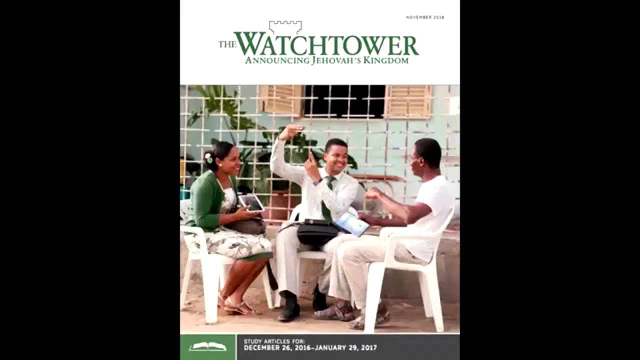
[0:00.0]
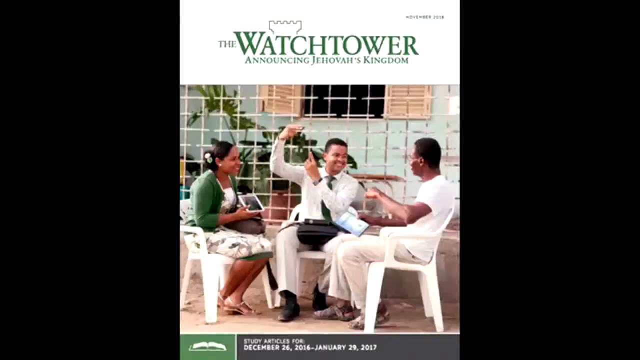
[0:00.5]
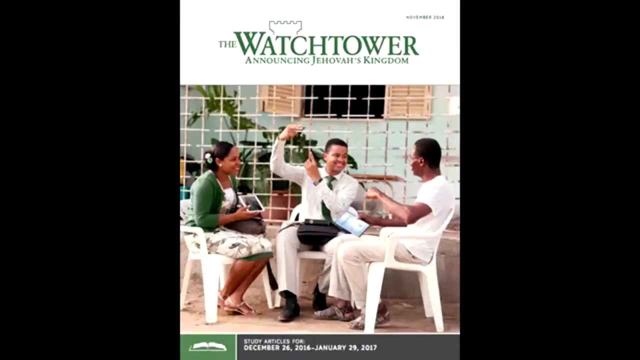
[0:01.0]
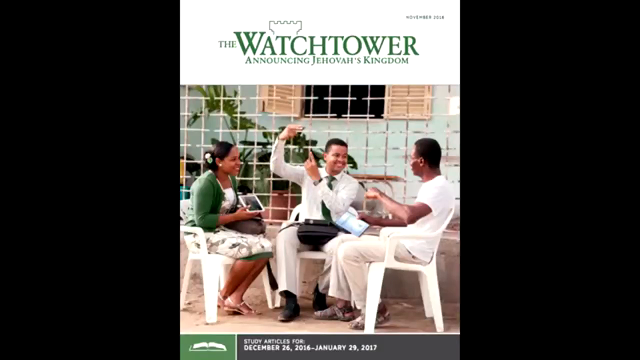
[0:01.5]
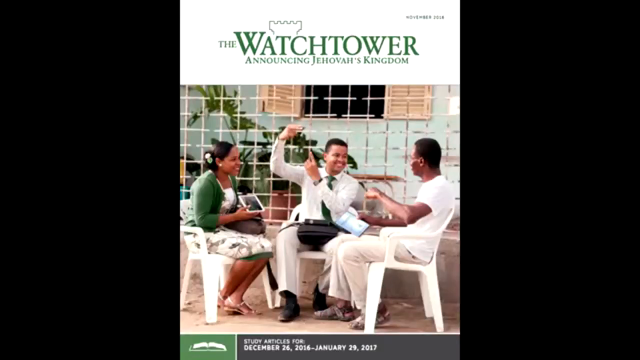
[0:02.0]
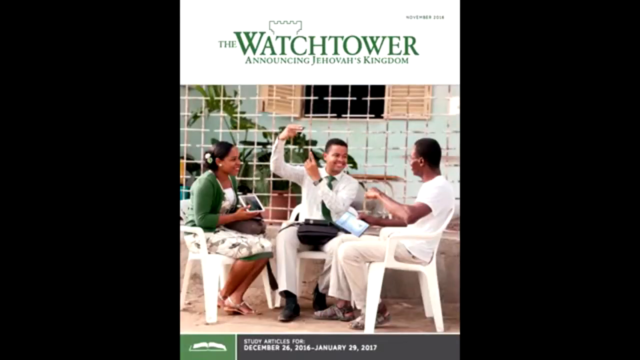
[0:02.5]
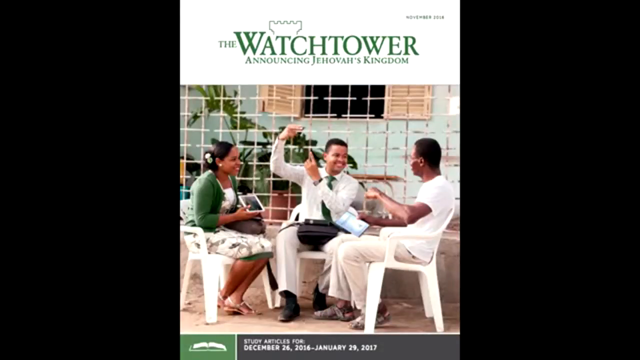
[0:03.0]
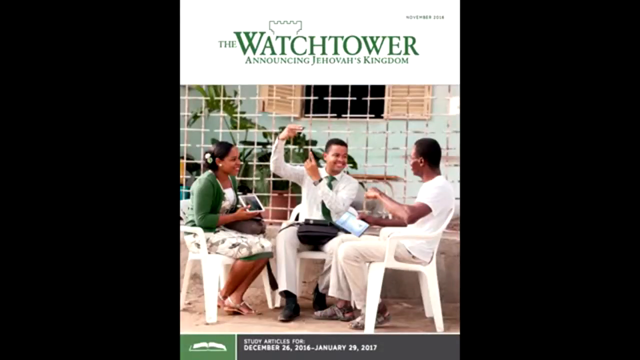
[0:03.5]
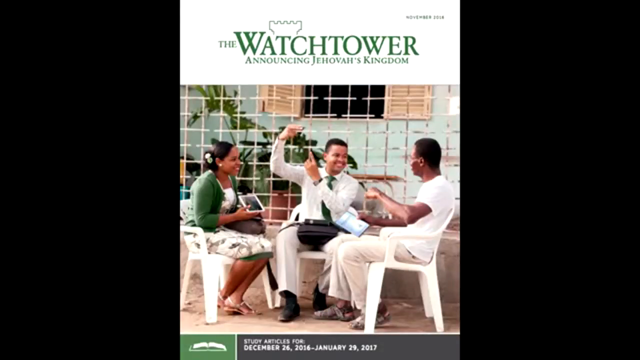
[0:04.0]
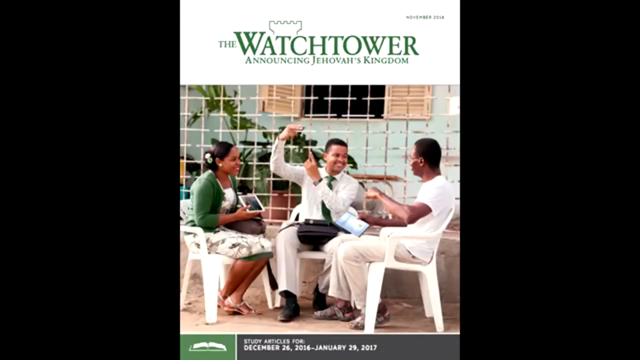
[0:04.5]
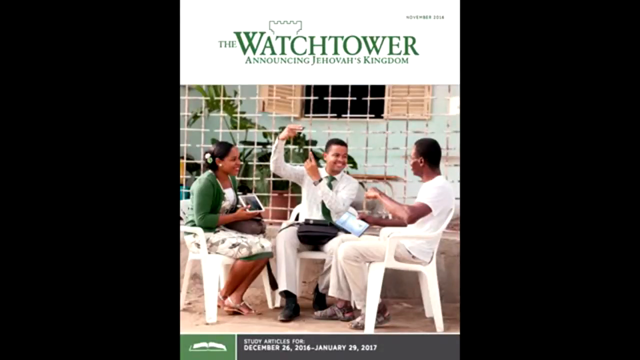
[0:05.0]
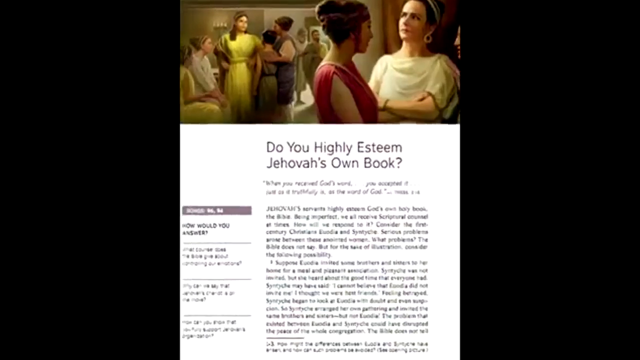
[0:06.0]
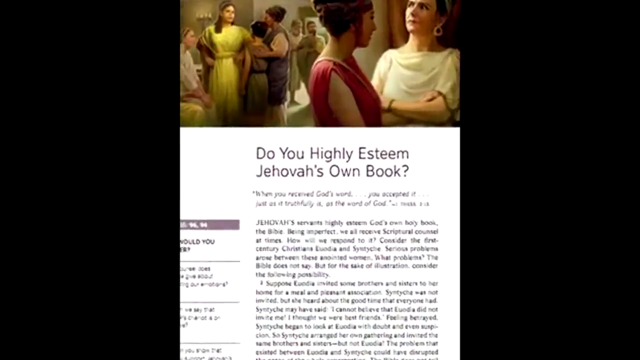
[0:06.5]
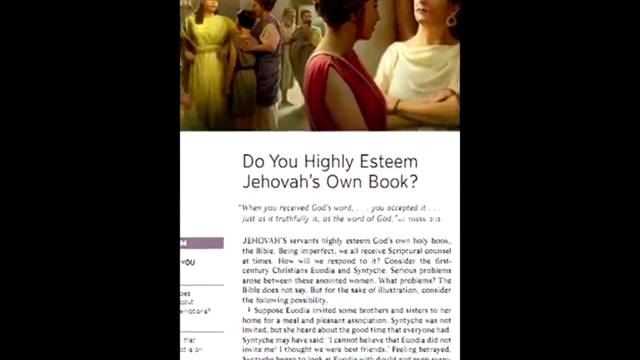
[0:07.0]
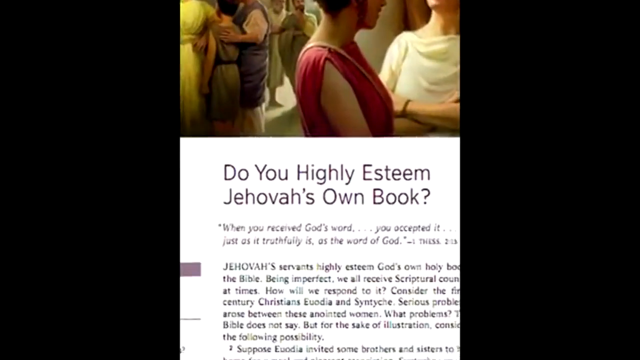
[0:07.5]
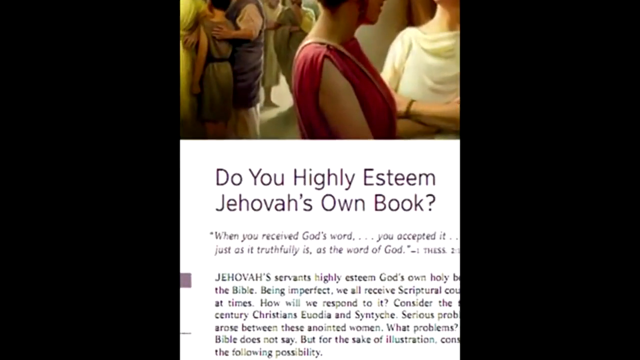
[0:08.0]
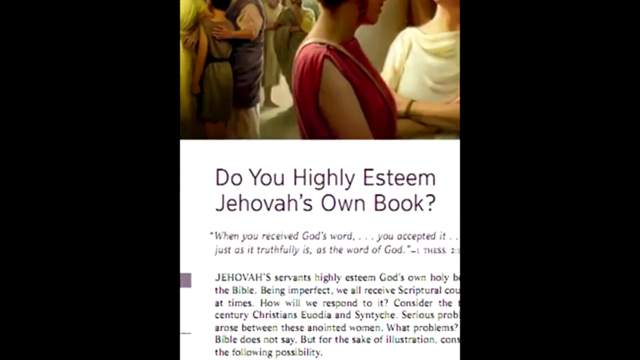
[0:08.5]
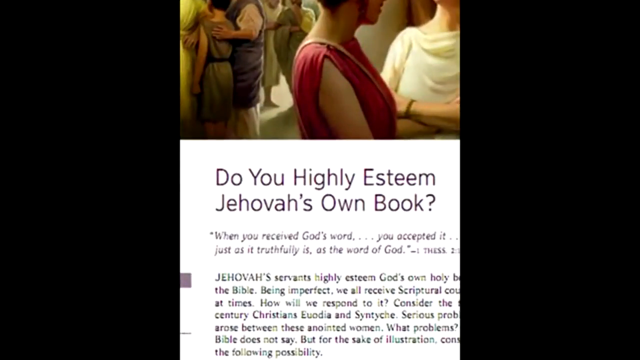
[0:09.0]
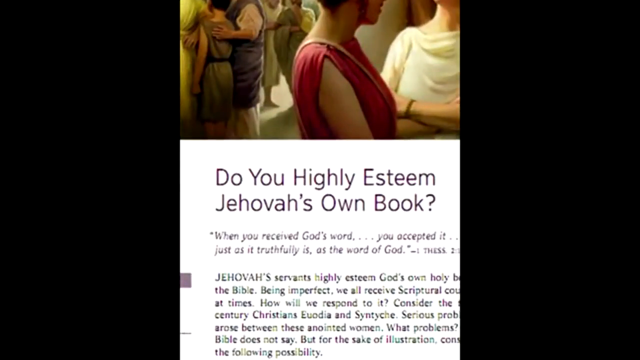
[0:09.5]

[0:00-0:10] The video opens on a still shot of a book, with black borders on the left and right sides. In the center, a white area runs down from the top about a third of the way. On it, in green, it says "the Watchtower," and above the T and the C is the little top edge of what looks kind of like a watchtower. Underneath, it says "announcing Jehovah's kingdom," and there is a little fine print in the top right corner. Below that is an image. A person in the middle wears a white shirt, tan pants and brown shoes and has short hair; his arms are out and up in front of him, a little to the left. To his left is a girl in a flowery dress to her knees with a green shawl over top; she has black hair pulled back and a phone in her hand. To the right of the man is another man, African-American with short black hair, in a white shirt, tan pants and brown shoes. They are sitting in white chairs. Behind them, some plants are visible in the far background, and the ground looks almost dark. The video then shows an excerpt from Jehovah's book and zooms in on "do you highly esteem Jehovah's own book?" Above it are some images of women.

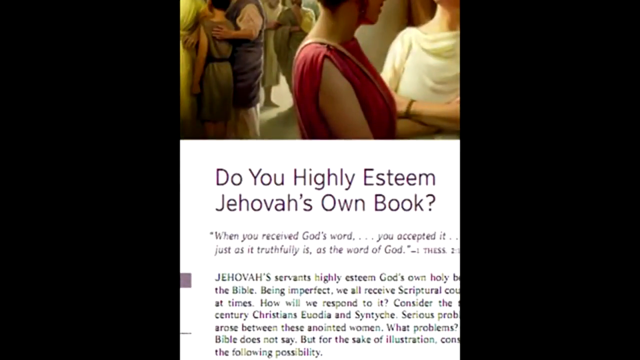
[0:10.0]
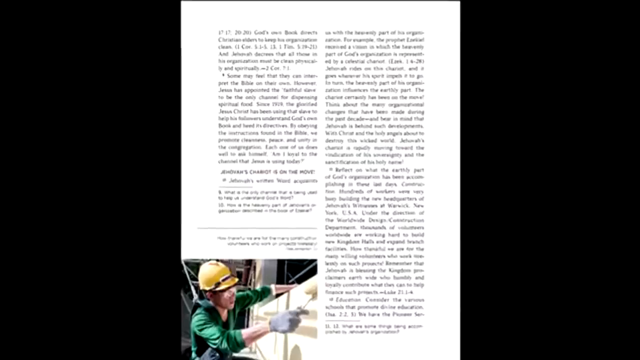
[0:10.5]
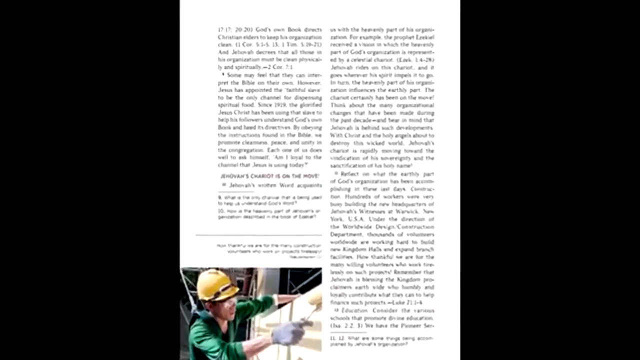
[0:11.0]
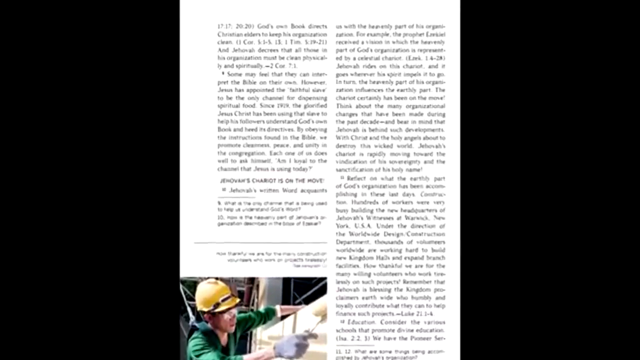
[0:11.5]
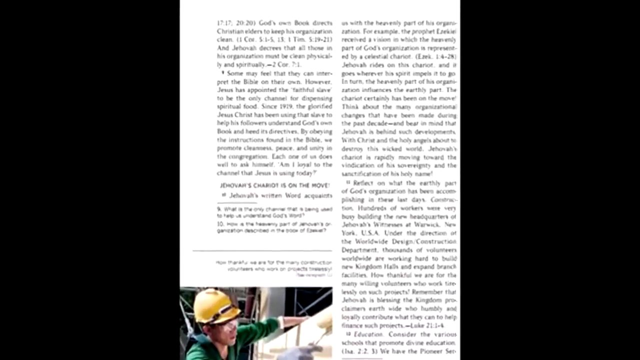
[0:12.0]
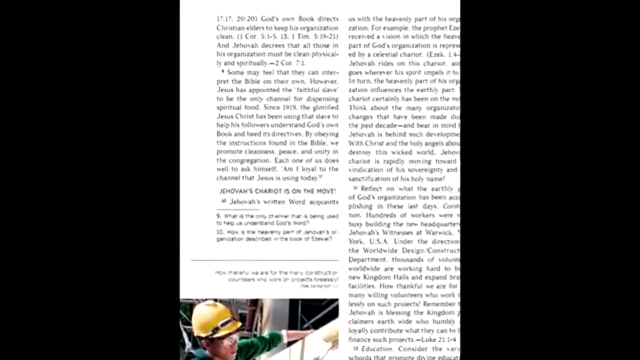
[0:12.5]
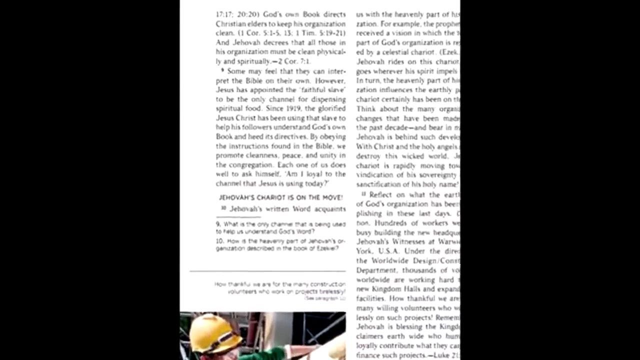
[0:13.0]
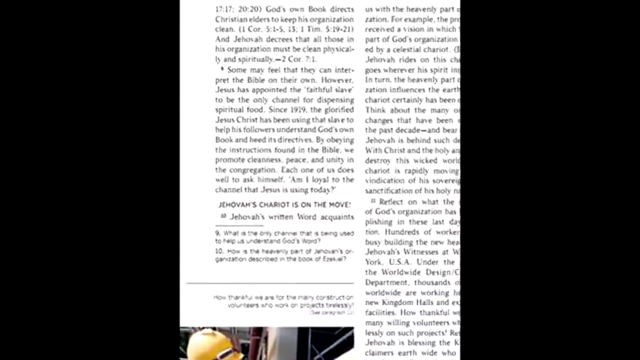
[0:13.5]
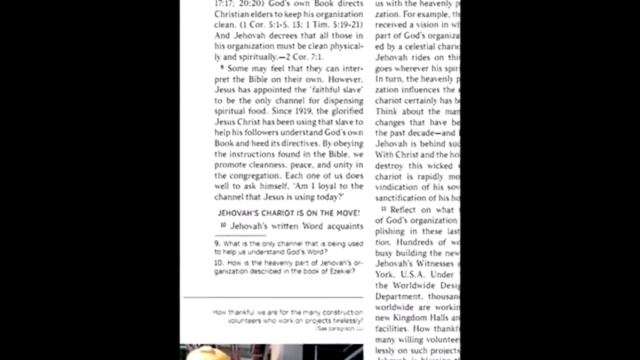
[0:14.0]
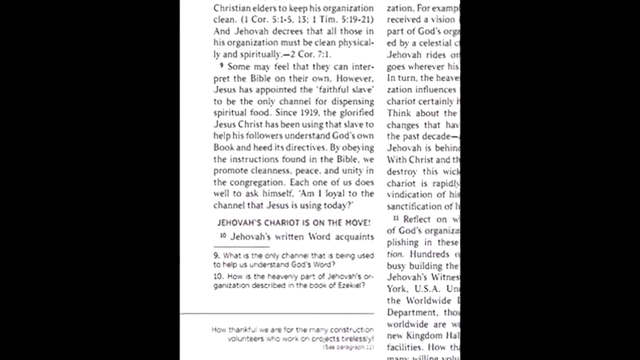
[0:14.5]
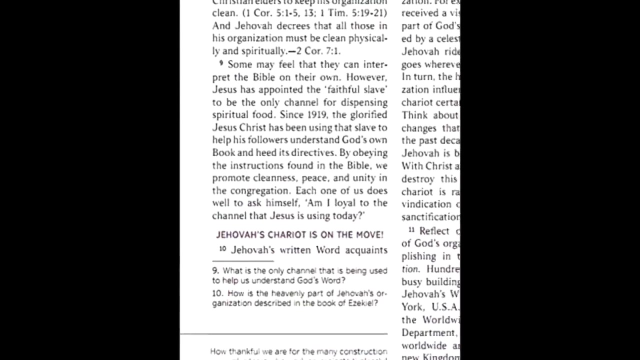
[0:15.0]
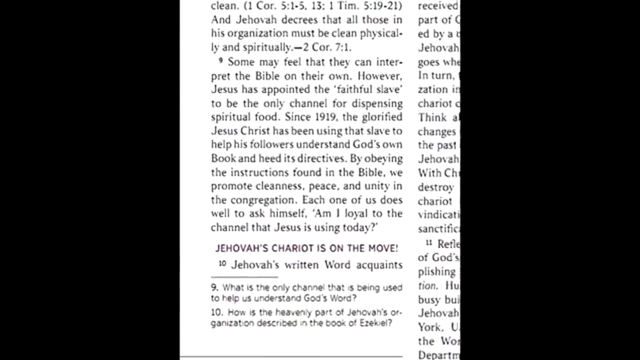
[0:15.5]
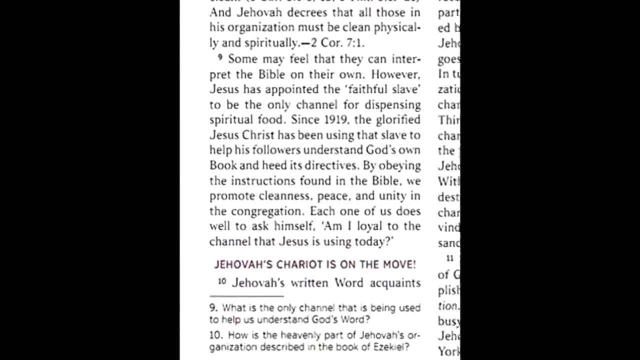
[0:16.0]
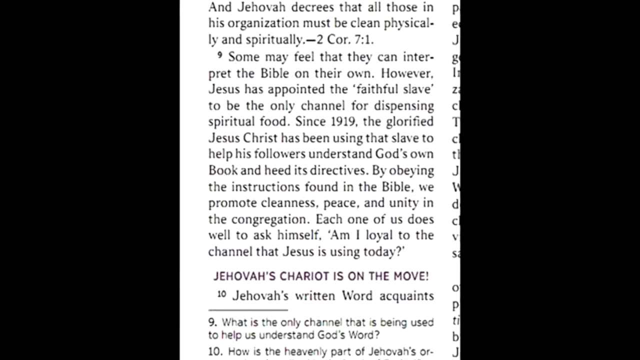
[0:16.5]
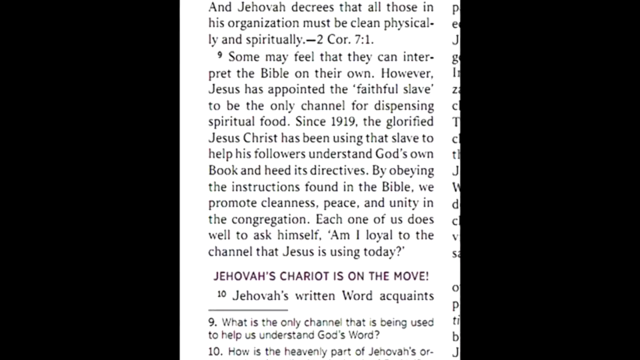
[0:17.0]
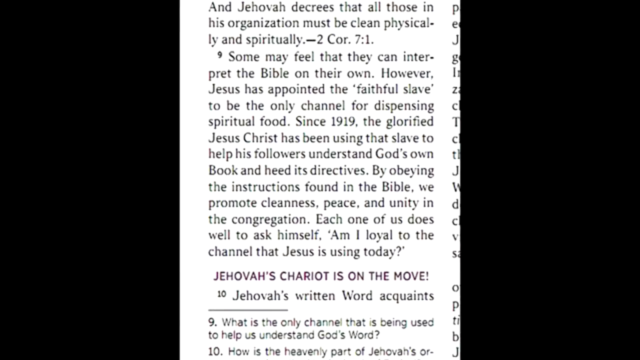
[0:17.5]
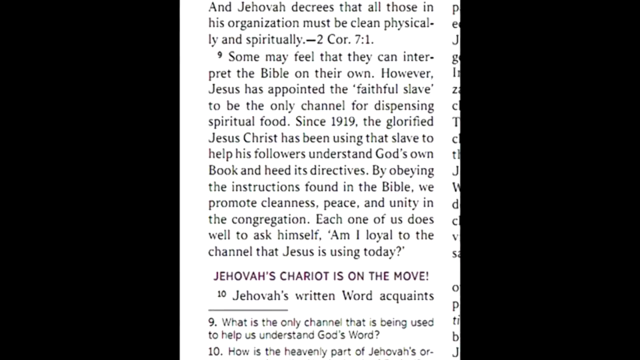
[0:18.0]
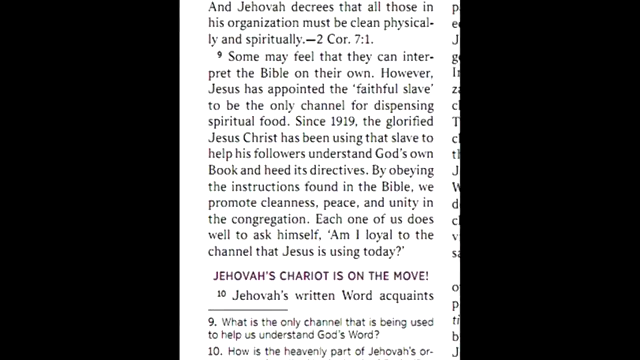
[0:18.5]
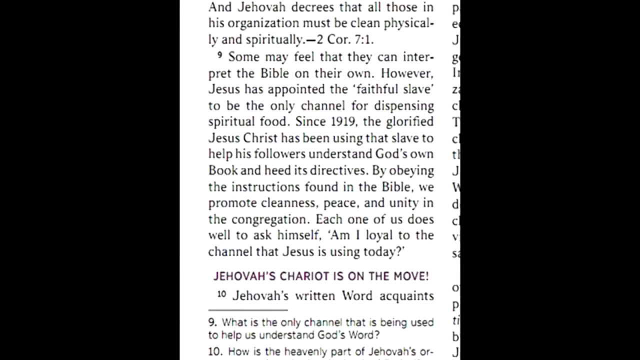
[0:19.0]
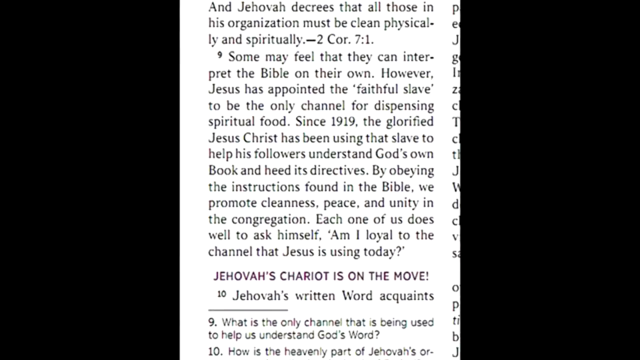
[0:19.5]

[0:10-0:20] The view stays on the zoomed-in portion of Jehovah's book. At the top, on the left side, a couple of people are visible from the head down wearing old-school looking robes, with a couple more in the far background in the center and a couple on the right below that. It says "do you highly esteem Jehovah's own book," and below it are words from the book. Then it cuts to a different page. A construction worker is in the bottom left corner, with two full lines of paragraphs, and the view slowly zooms in on a small area on the left side of the page: black text from inside the Bible.